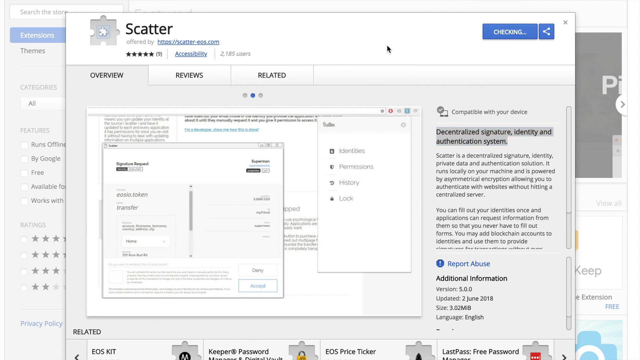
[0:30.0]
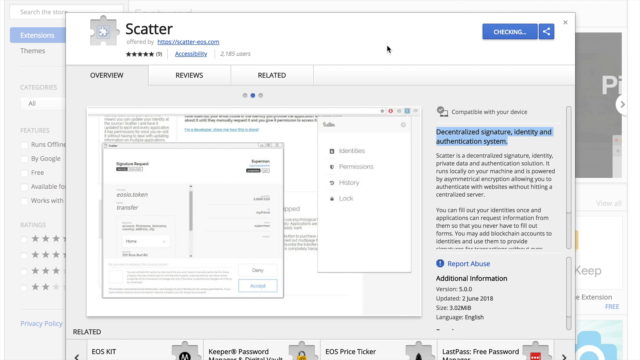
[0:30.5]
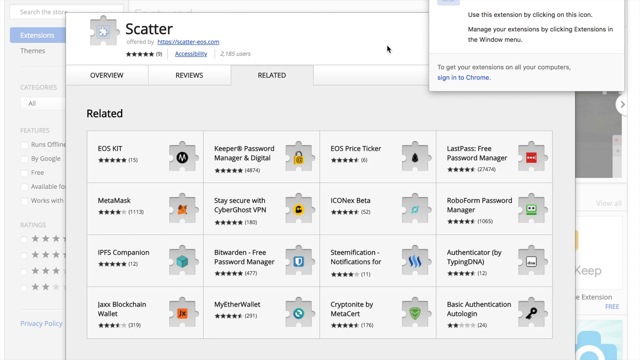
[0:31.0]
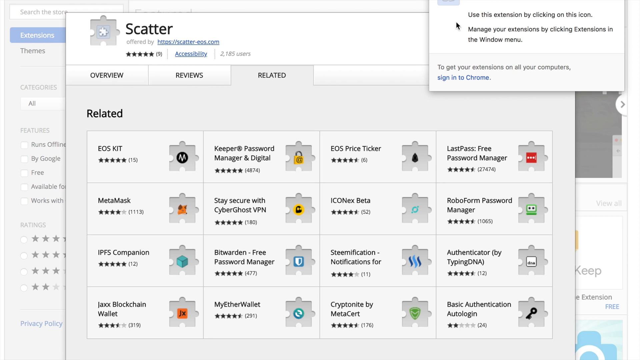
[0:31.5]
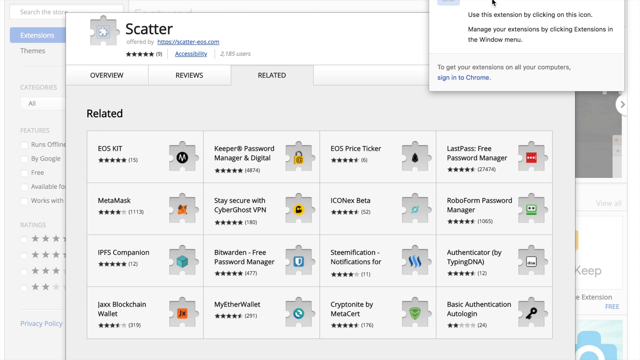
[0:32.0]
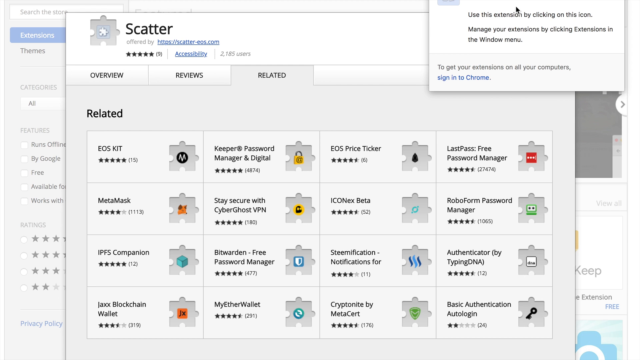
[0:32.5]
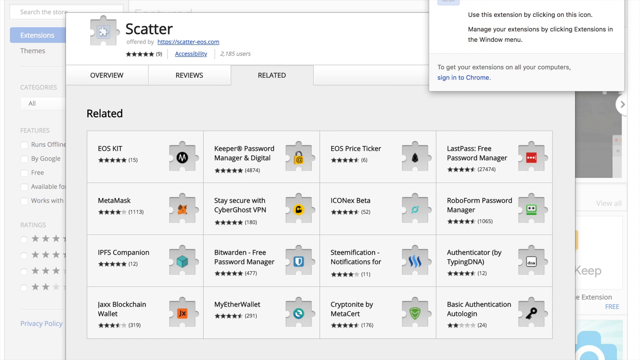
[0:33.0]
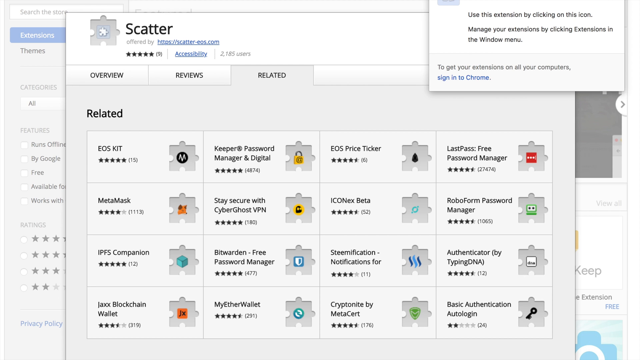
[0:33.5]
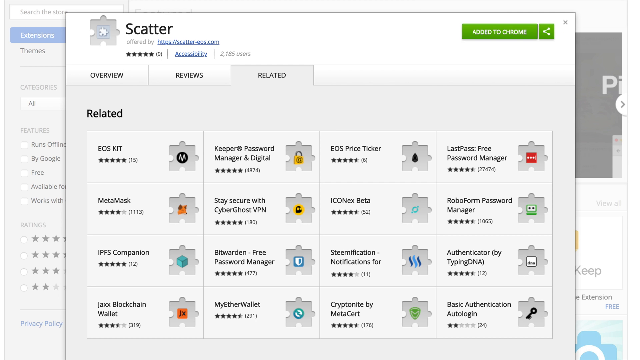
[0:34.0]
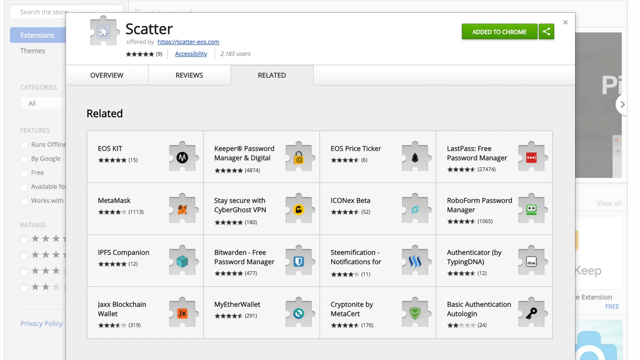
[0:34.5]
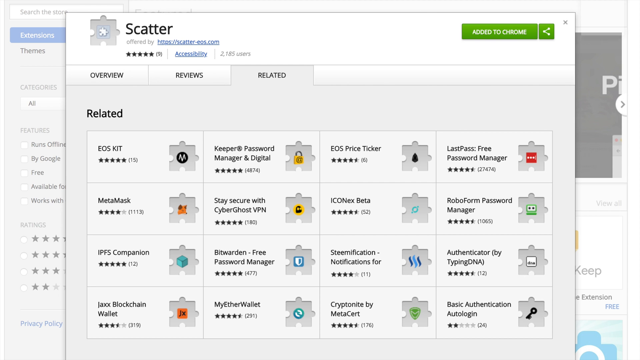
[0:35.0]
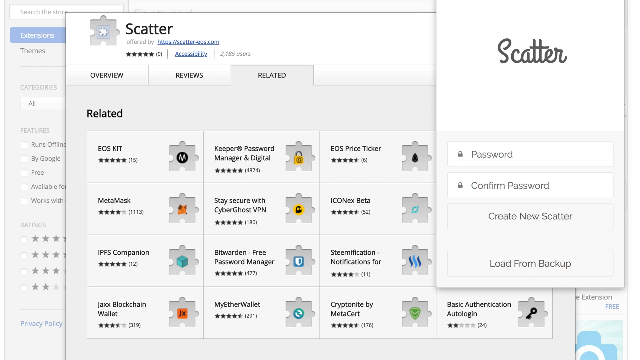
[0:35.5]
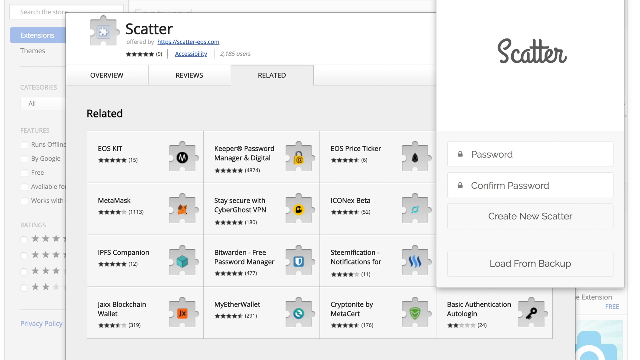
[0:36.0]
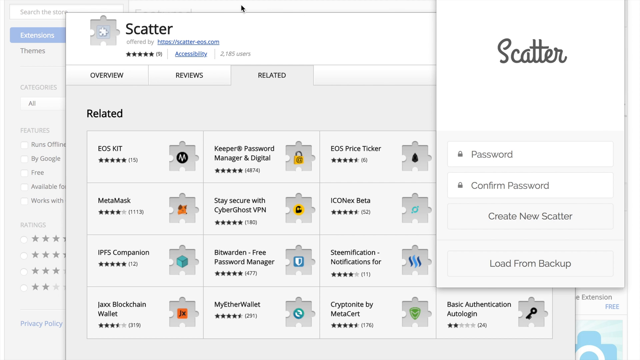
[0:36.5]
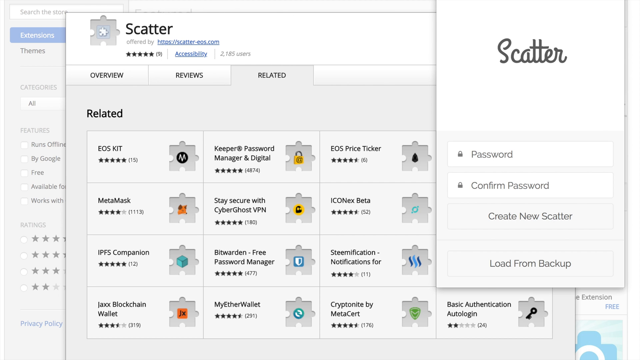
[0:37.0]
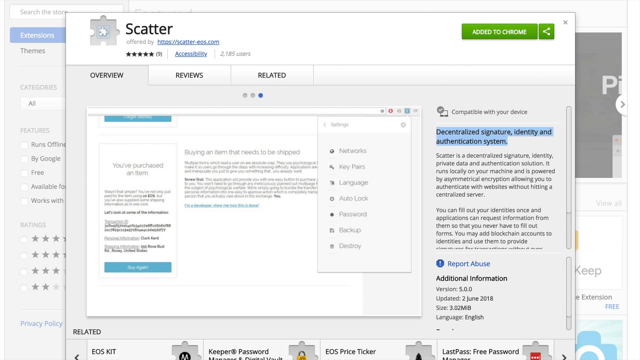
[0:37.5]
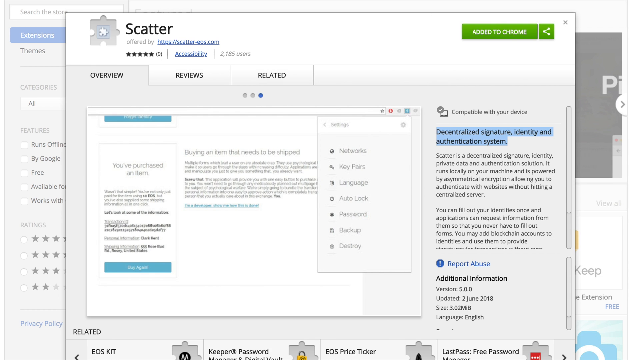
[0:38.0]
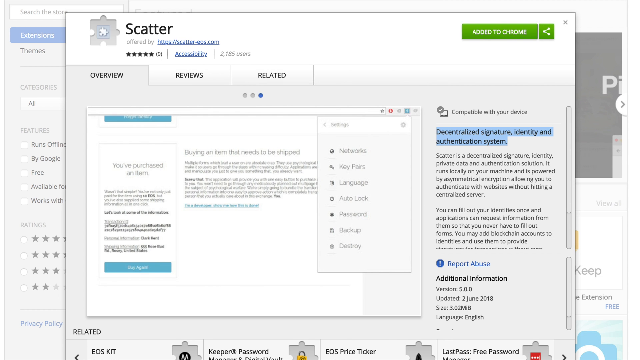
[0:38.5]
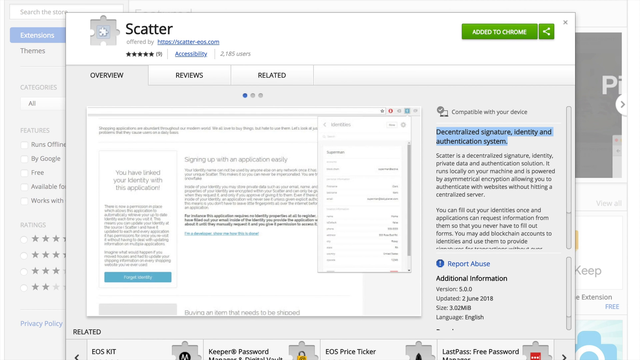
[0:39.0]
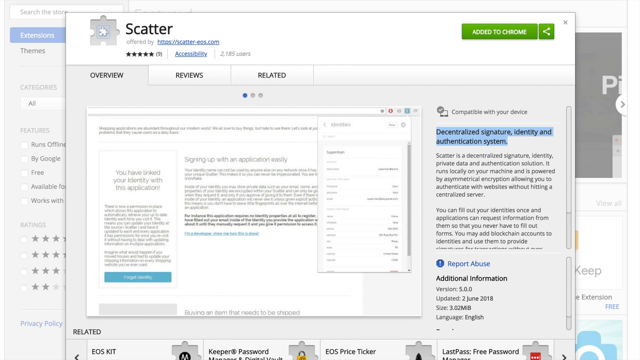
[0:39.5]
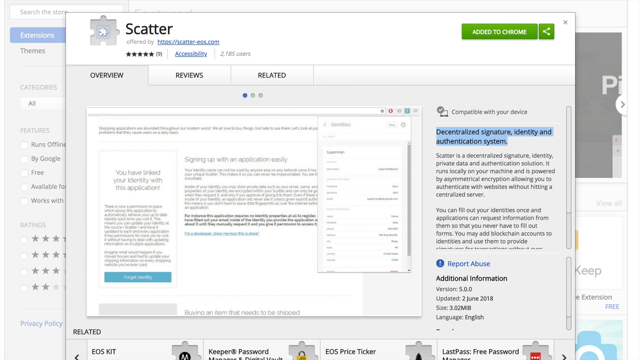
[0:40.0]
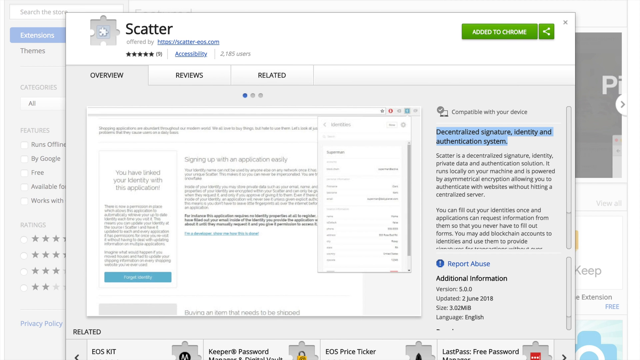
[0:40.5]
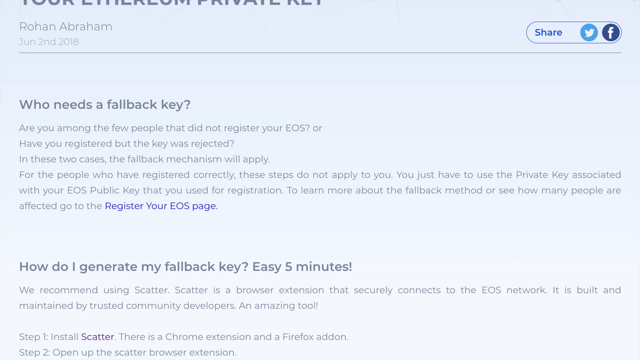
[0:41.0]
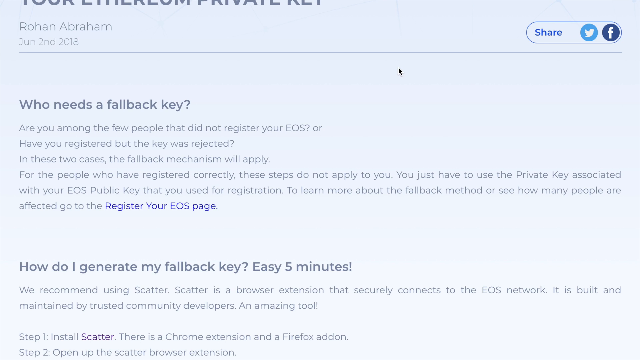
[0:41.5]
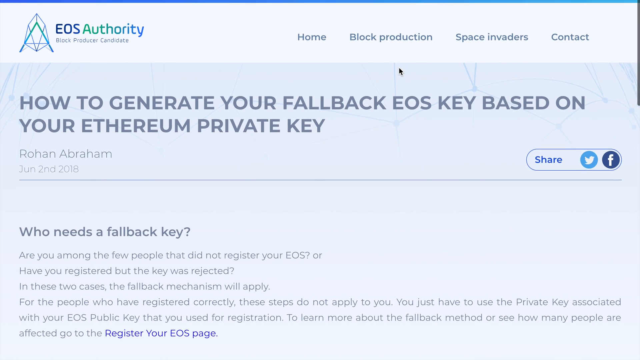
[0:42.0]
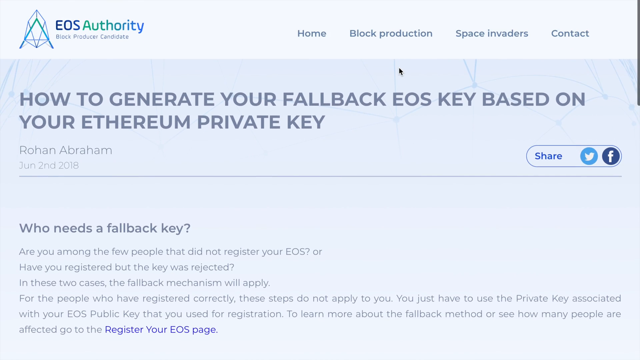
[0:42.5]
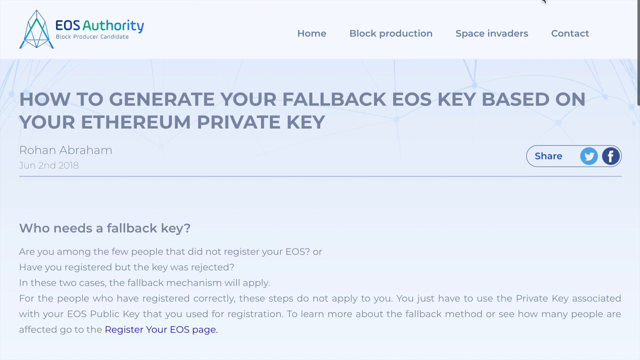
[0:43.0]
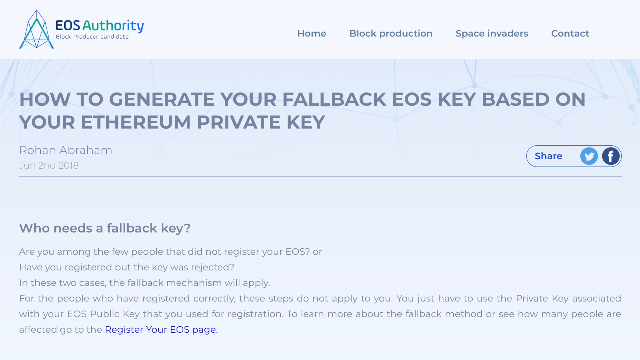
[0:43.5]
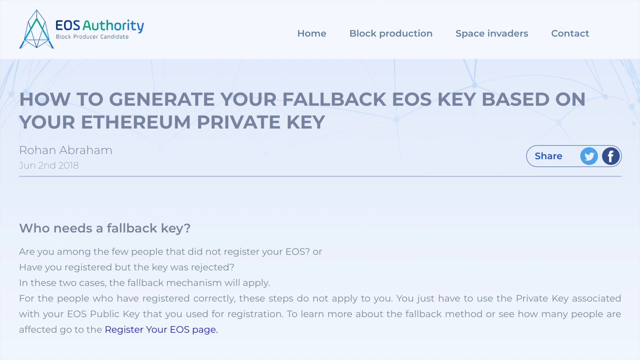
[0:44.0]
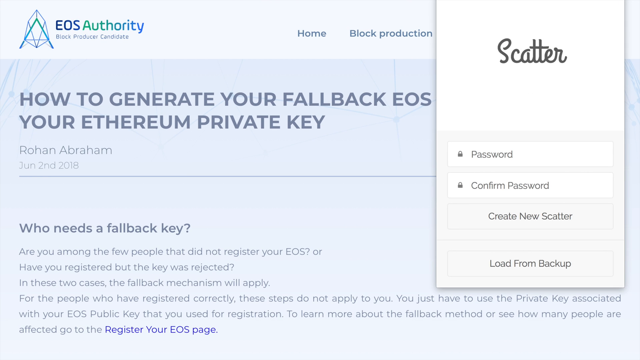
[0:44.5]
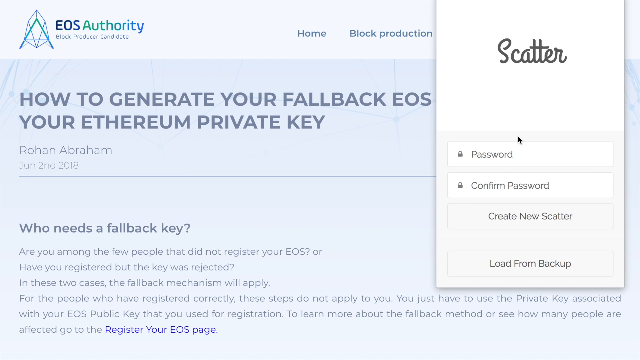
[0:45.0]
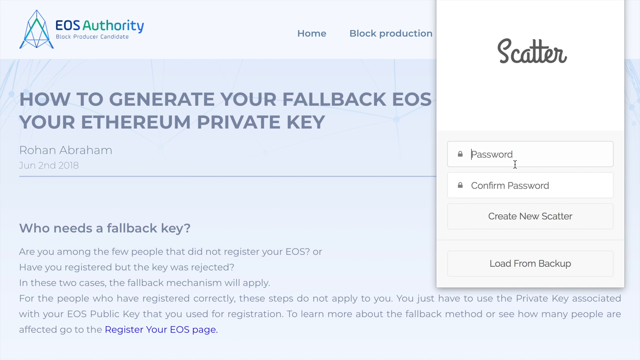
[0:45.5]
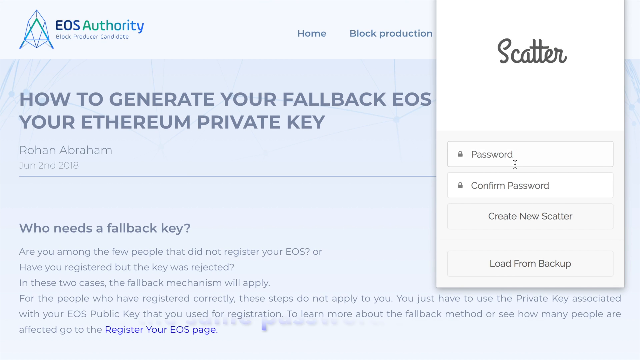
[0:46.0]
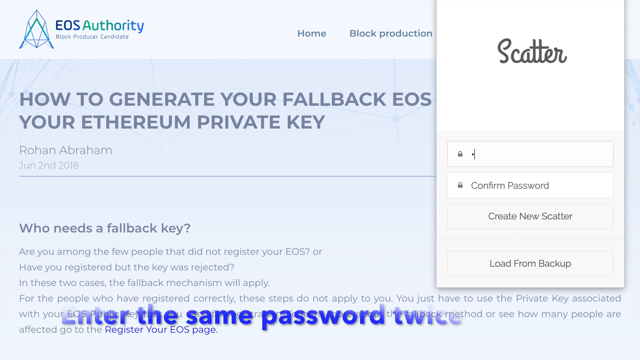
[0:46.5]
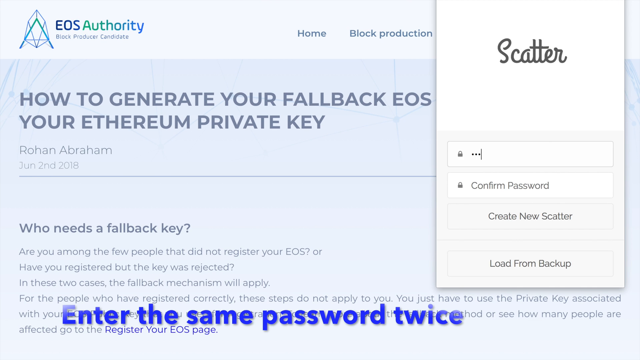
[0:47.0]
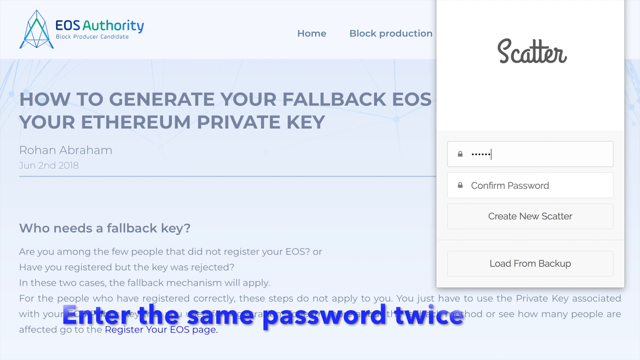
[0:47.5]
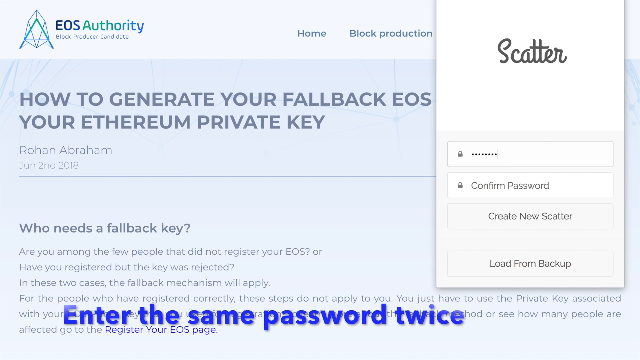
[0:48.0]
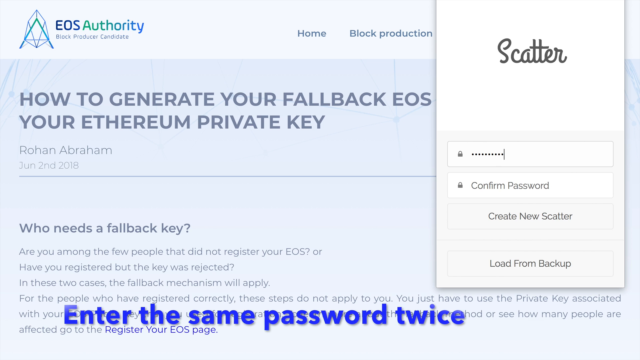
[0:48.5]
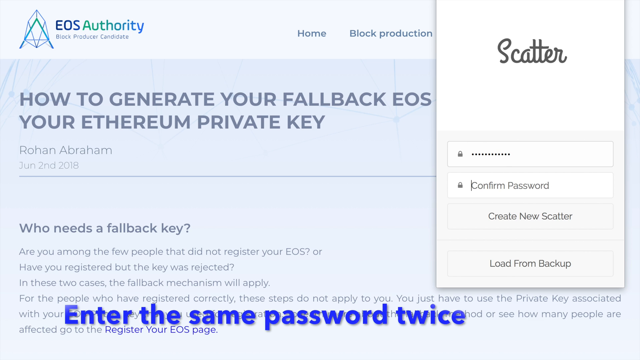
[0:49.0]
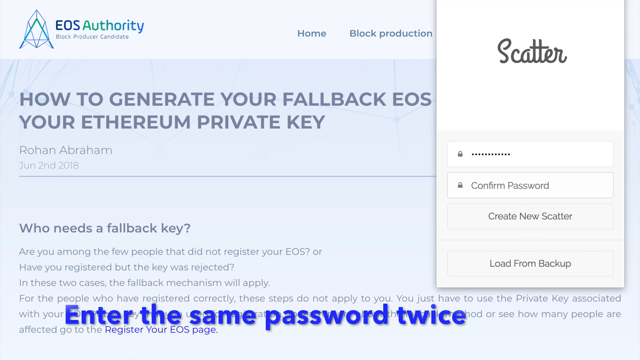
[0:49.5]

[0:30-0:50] A page full of information begins with a pop-up message that shows a password and other information. Certain things are highlighted in either gray or blue to mark important information. After signing, an overview tab, a reviews tab, and a related tab appear, each giving more information. At the very top are the star rating, the offered-by link, an accessibility link, and the number of users; at the bottom on the far right are the version, the date it was updated, the size in megabytes, and the language. The additional important information is highlighted in gray.